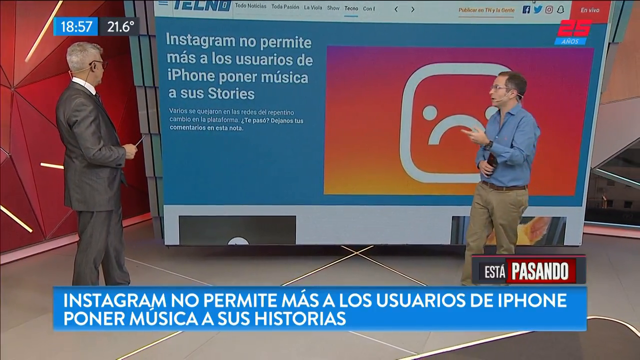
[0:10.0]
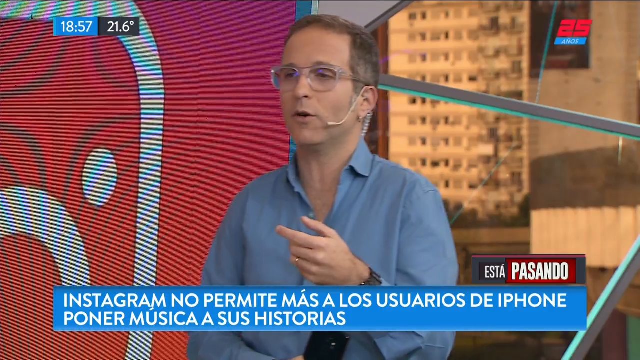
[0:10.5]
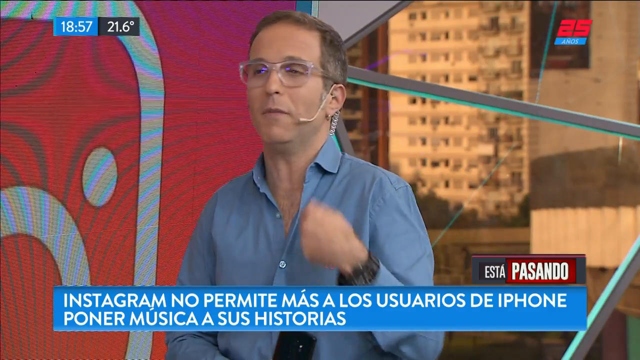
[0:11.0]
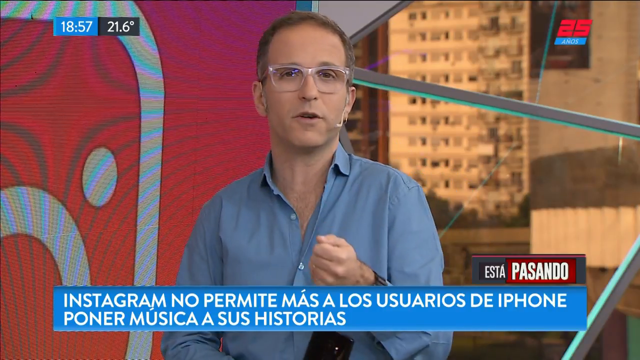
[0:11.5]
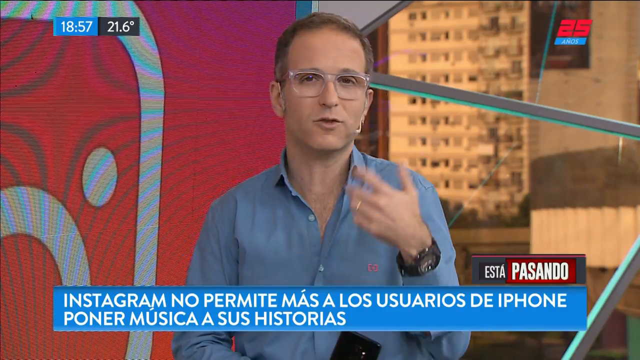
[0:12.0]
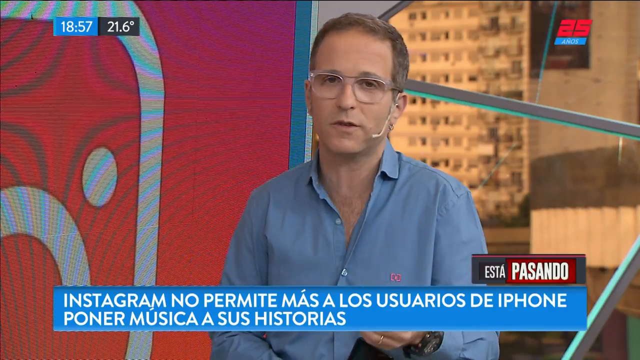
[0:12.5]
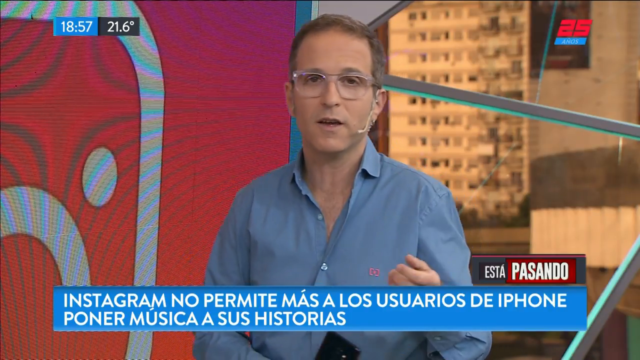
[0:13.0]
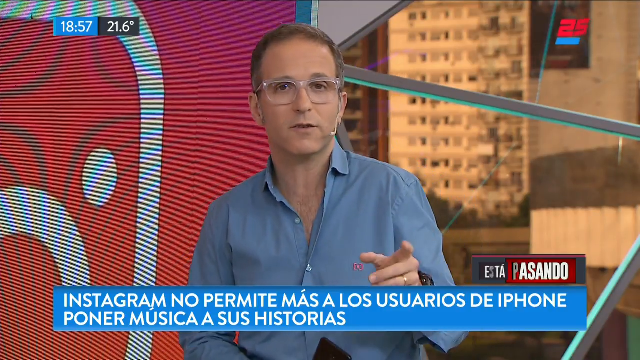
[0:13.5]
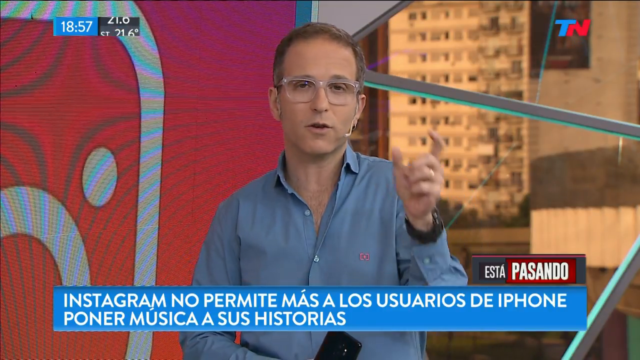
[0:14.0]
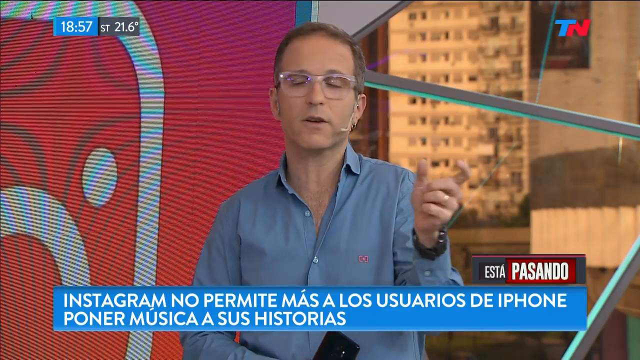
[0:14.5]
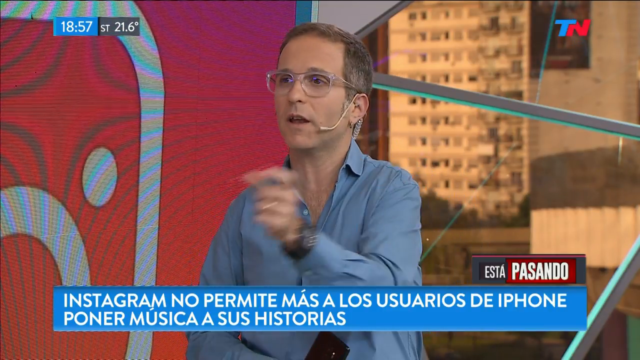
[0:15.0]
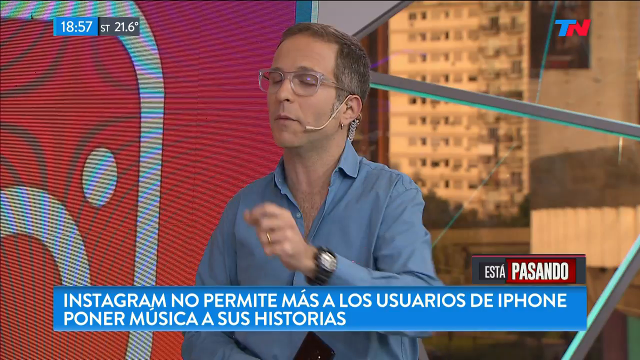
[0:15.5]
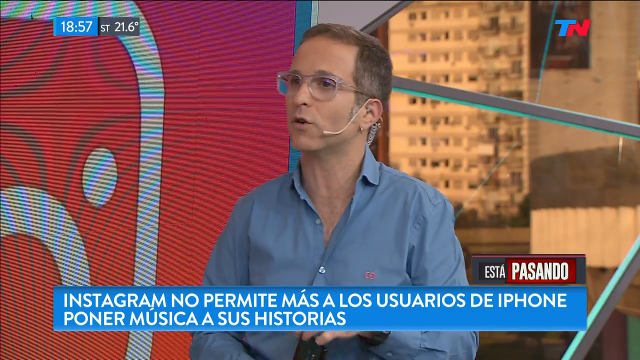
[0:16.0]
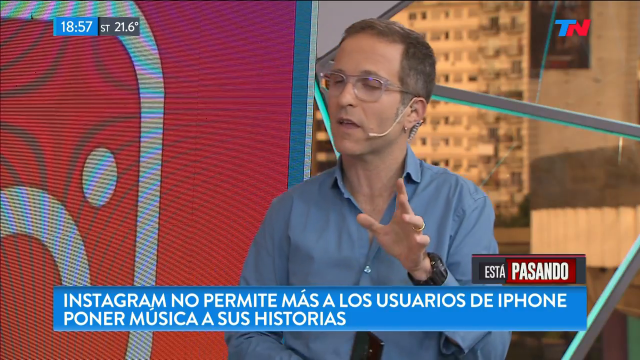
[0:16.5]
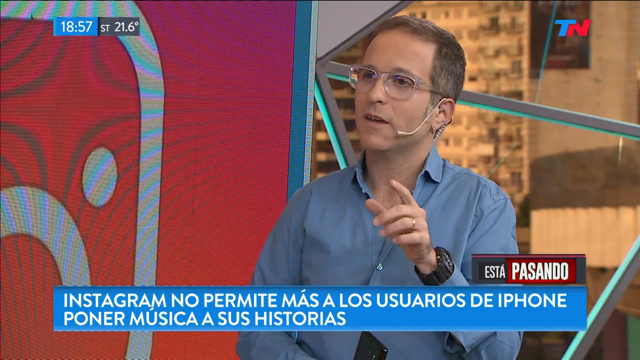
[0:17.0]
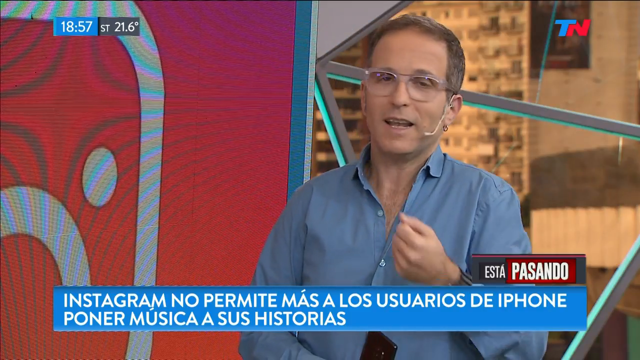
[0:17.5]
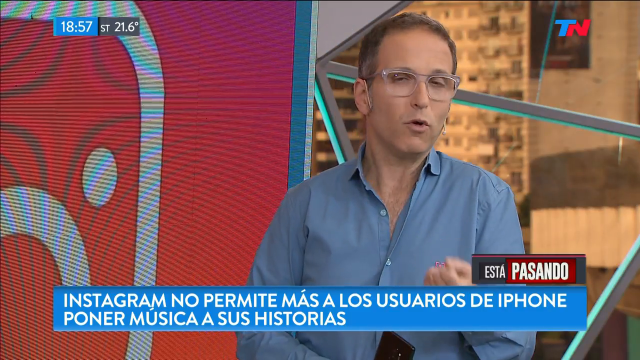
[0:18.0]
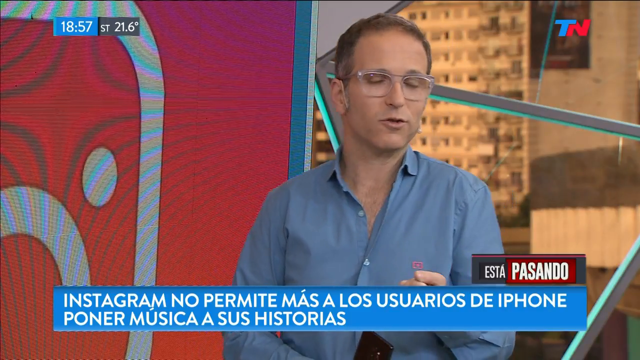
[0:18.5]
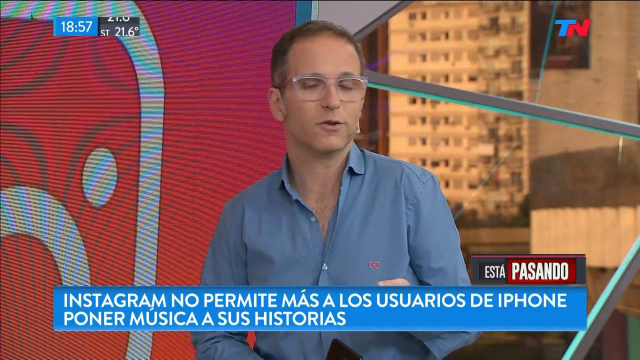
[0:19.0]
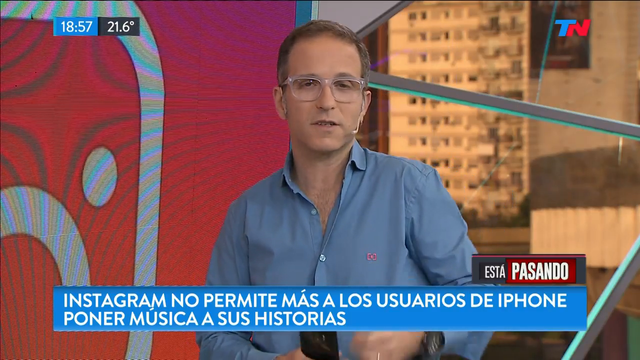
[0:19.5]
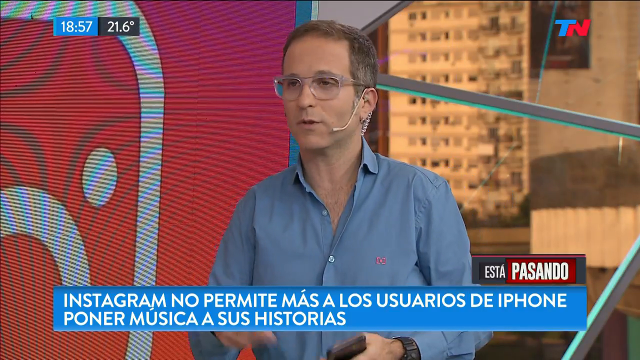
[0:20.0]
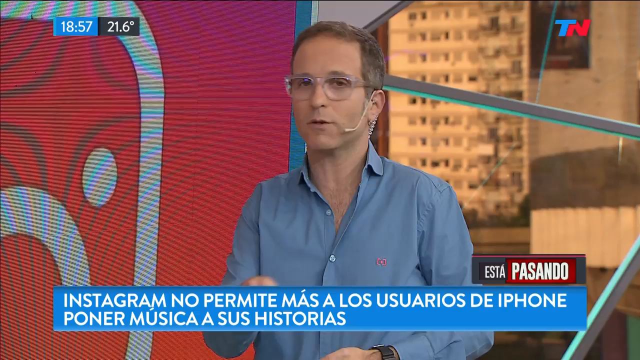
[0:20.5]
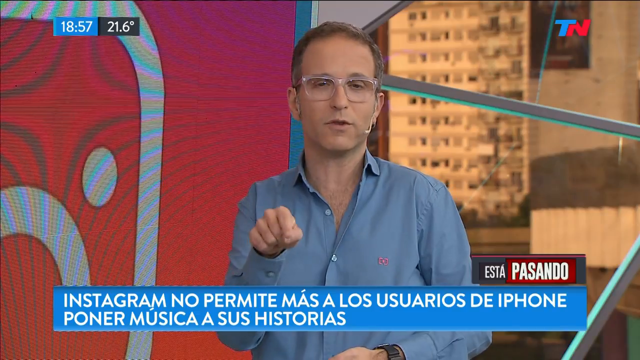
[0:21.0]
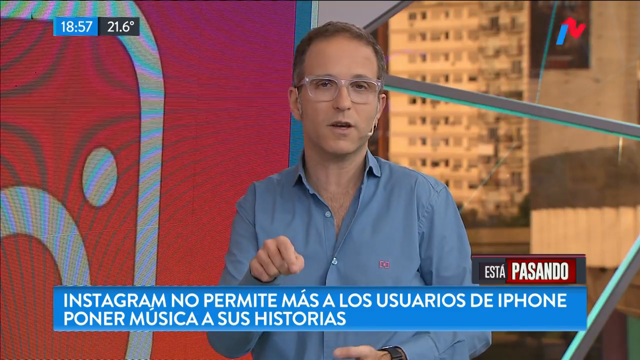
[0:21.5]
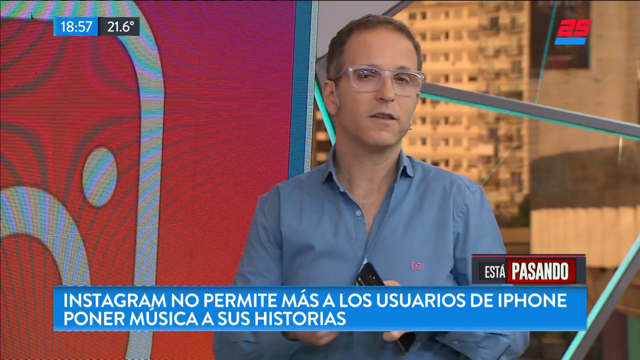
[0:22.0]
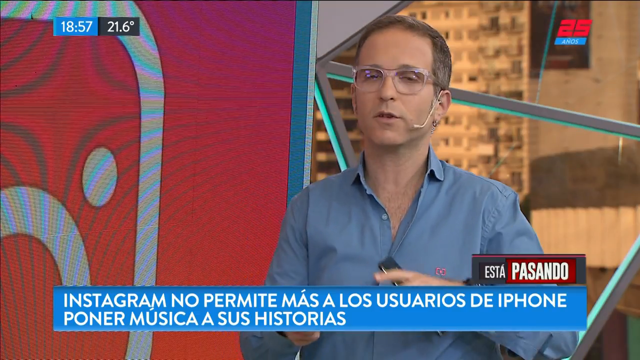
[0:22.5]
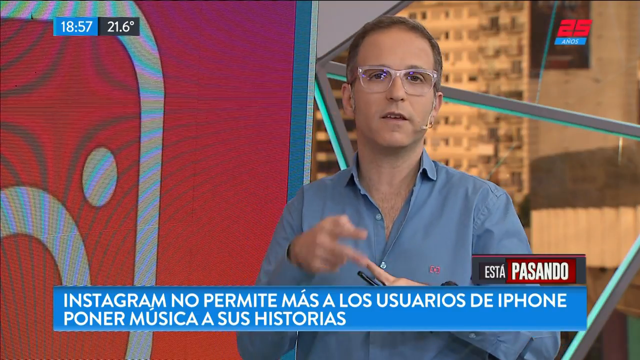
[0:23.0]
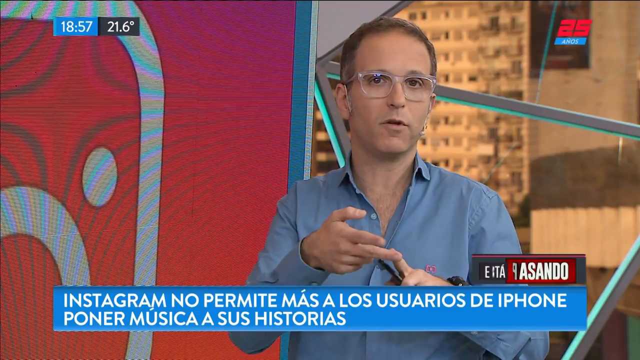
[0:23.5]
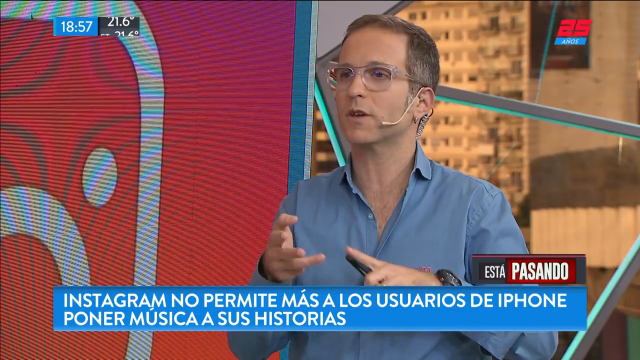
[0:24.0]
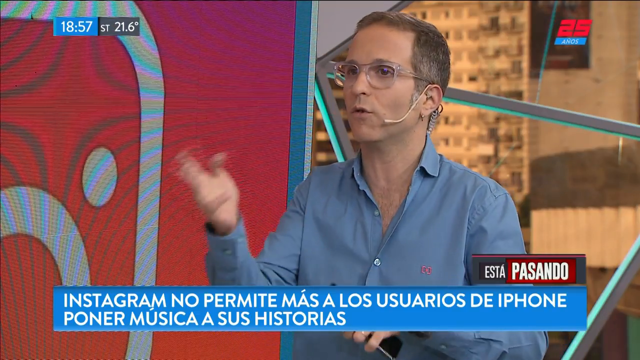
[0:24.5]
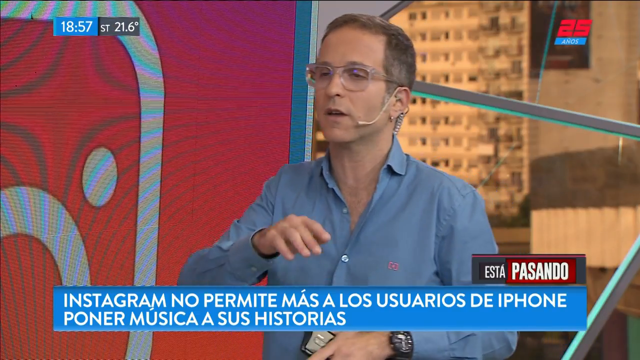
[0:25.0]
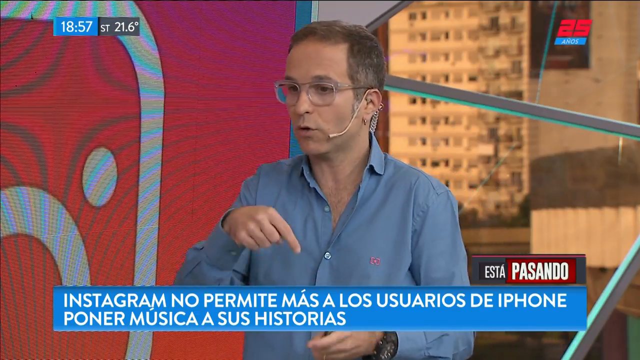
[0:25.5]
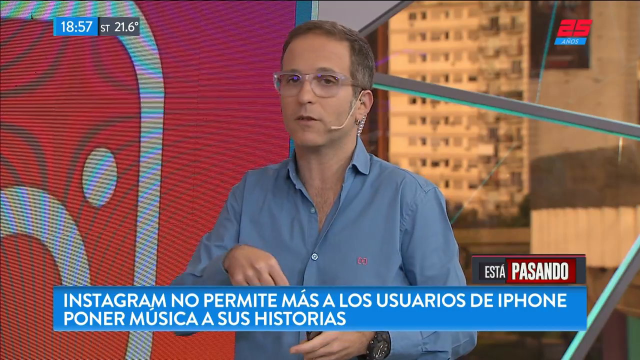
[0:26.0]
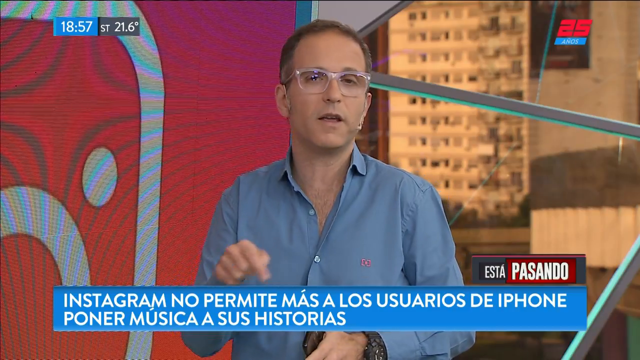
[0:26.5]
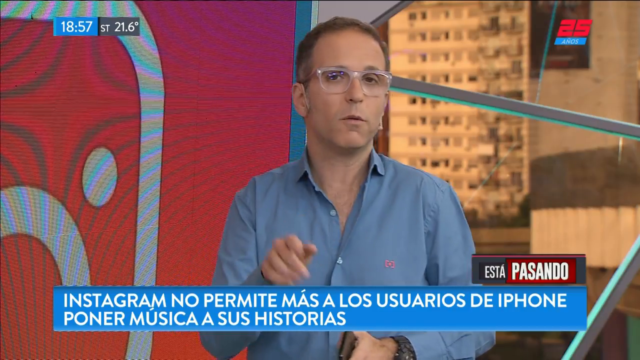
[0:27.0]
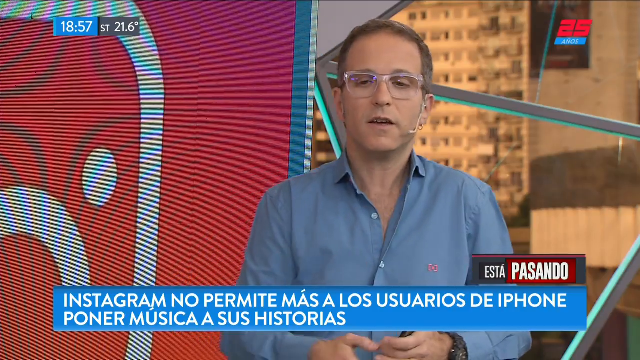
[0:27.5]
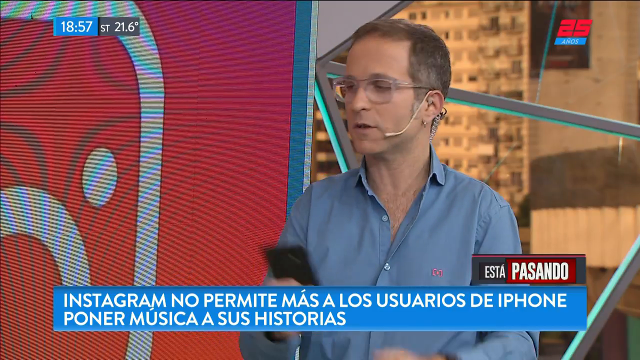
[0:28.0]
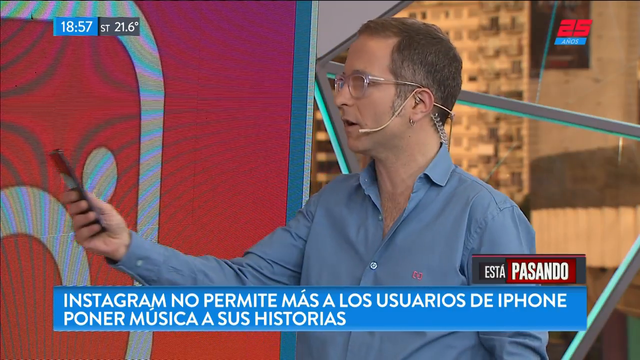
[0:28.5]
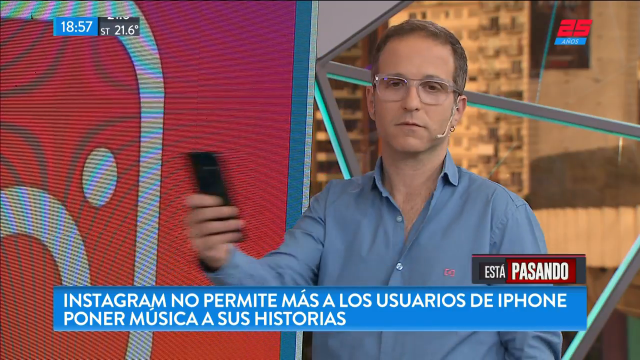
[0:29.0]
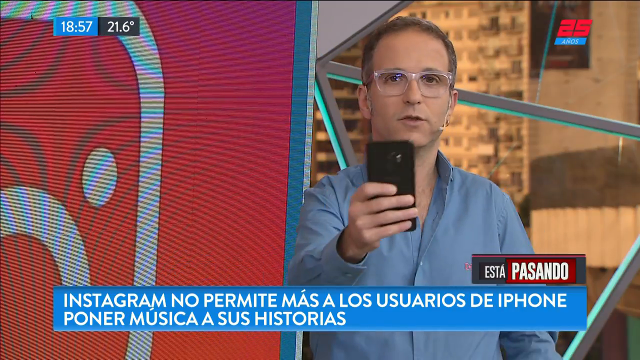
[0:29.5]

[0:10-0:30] A closer view from a different angle shows the same picture of the Instagram camera turned into a frowny face, along with a close-up of the man who was on the right. He wears dress pants, a blue button-down shirt, glasses and a black watch, and is presumably talking about Instagram not allowing iPhone users to put music in their stories. He talks with his hands a little. At first he holds a black phone in his right hand; partway through he shifts it into his left hand. A bar at the bottom of the screen shows the story's text. The upper left shows the time, 1857, and 21.6 degrees. There is a "TN" in the upper right, possibly standing for Tennessee.